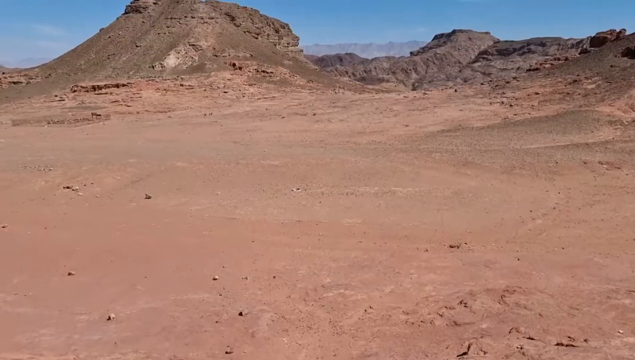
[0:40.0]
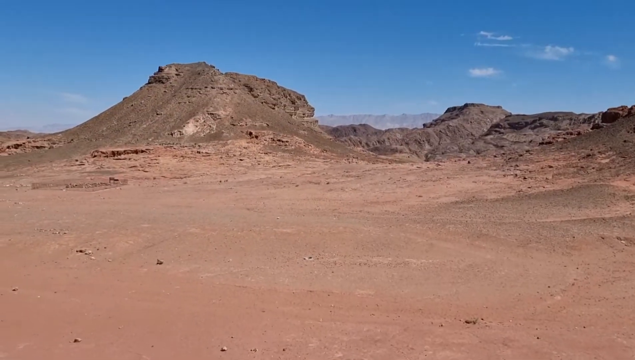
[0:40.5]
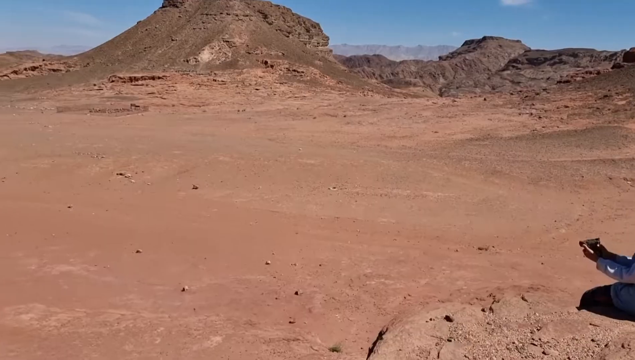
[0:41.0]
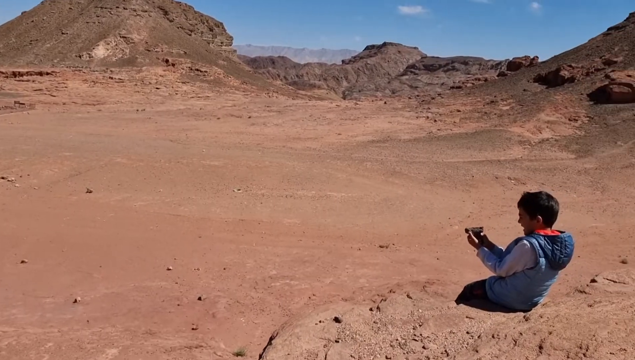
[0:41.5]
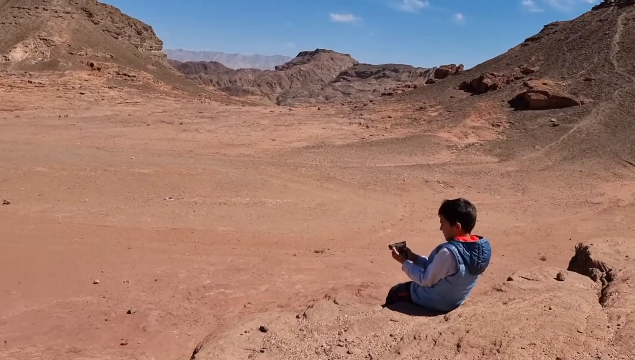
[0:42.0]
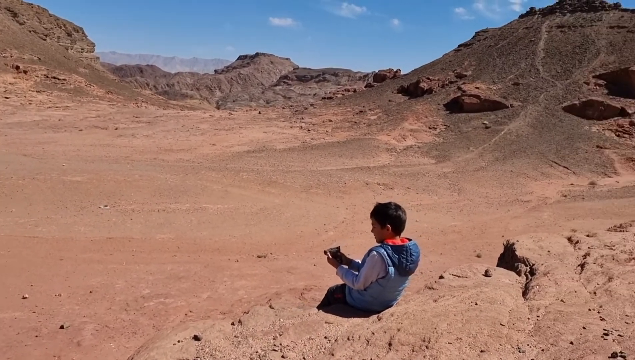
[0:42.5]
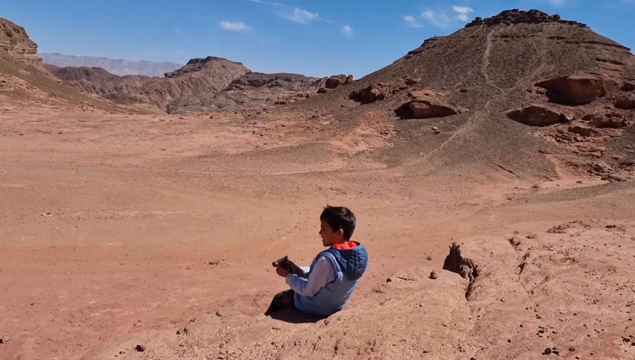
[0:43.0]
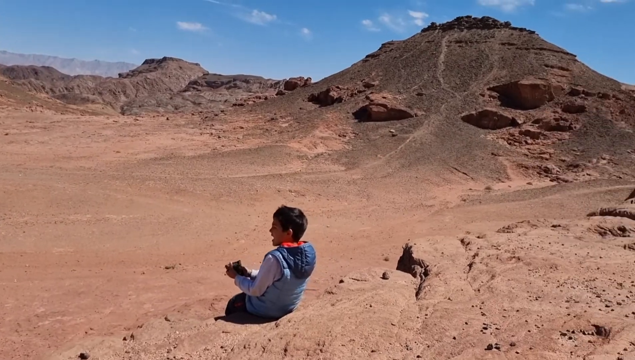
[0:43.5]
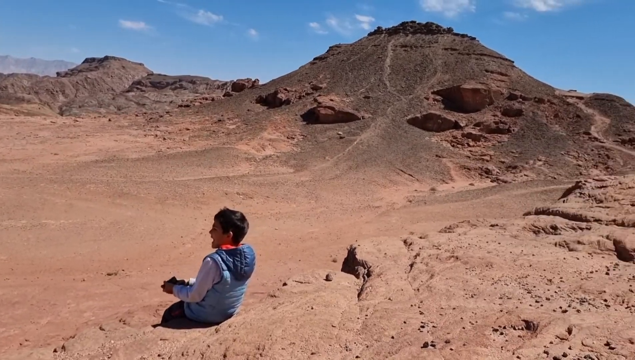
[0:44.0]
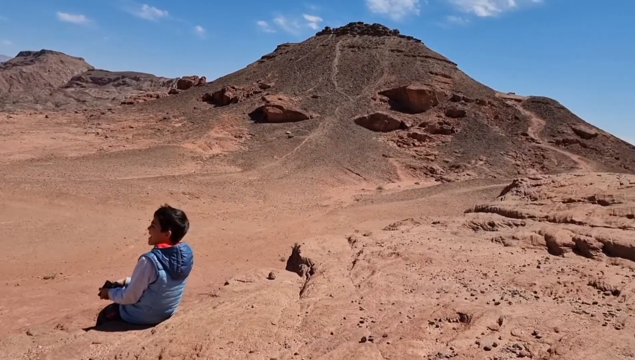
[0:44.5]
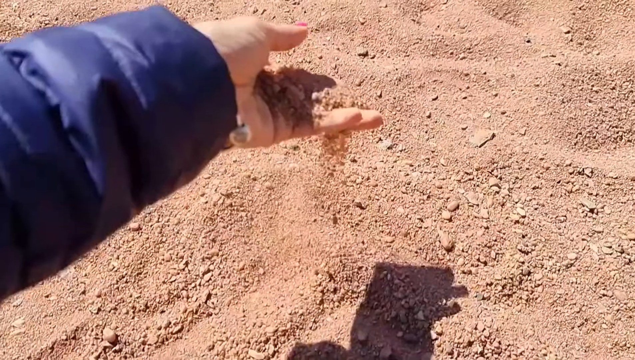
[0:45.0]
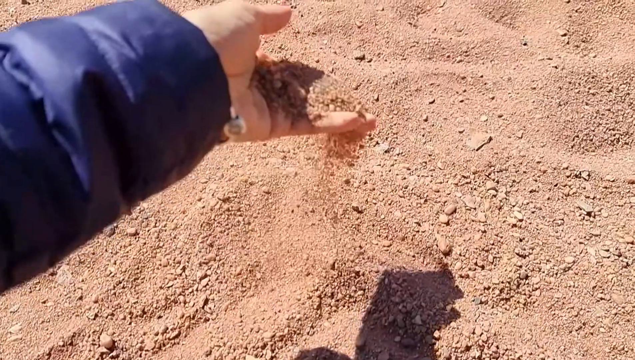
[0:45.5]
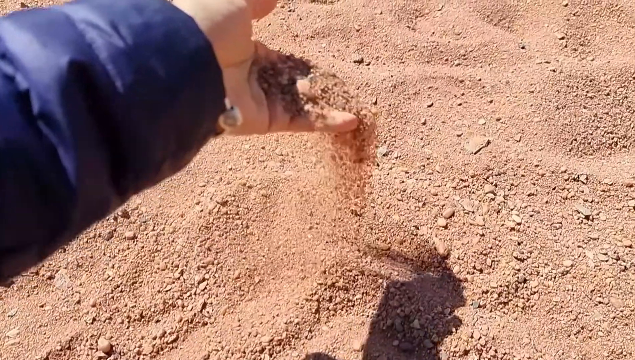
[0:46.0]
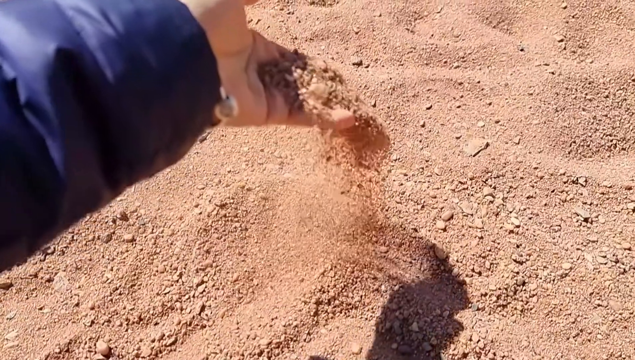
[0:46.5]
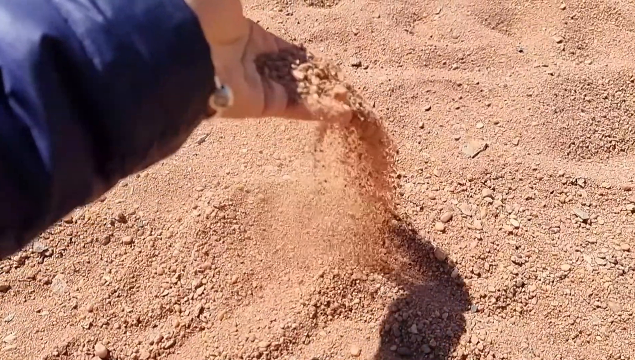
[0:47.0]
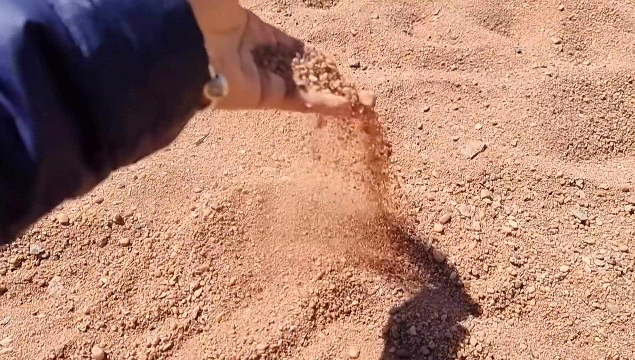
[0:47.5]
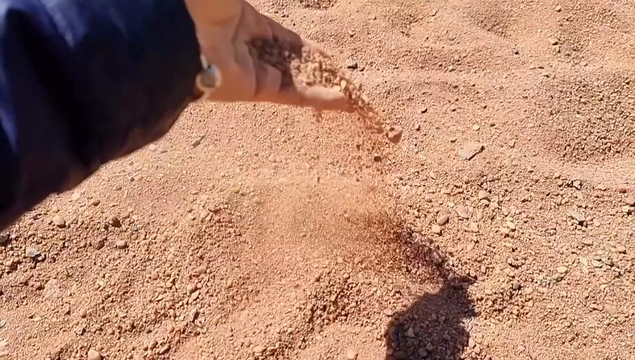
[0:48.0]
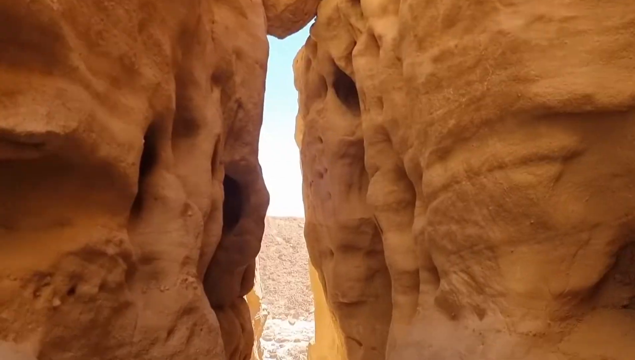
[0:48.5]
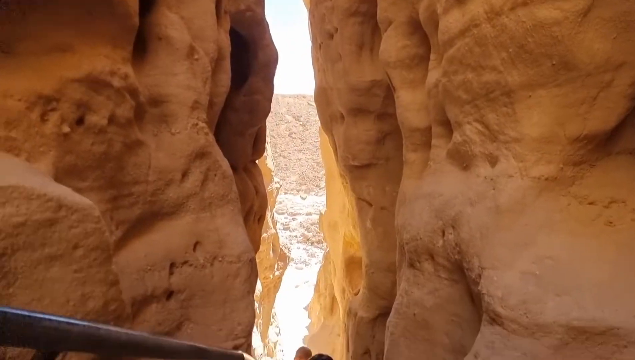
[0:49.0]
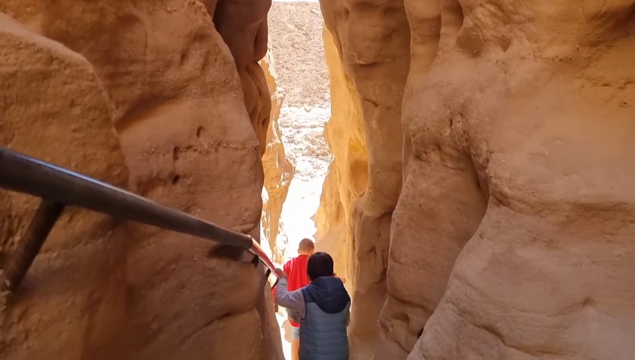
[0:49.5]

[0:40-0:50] Outdoors in a very red and brown desert landscape, a hand comes into the image and, in slow motion, picks up rocks and pebbles and drops them from its fingers. The landscape is very dusty. The red-brown hues of the desert dust contrast with the deep blue sky, which is mostly clear with just a few tiny white puffy clouds. Children are also seen playing.